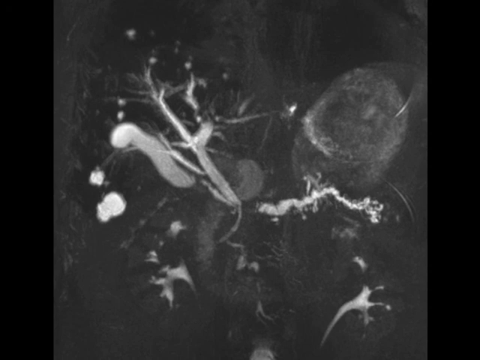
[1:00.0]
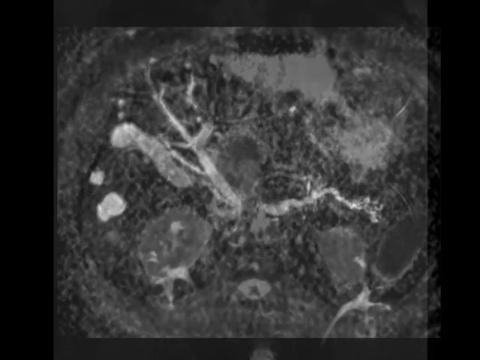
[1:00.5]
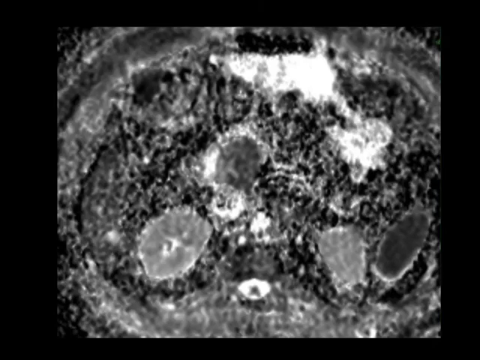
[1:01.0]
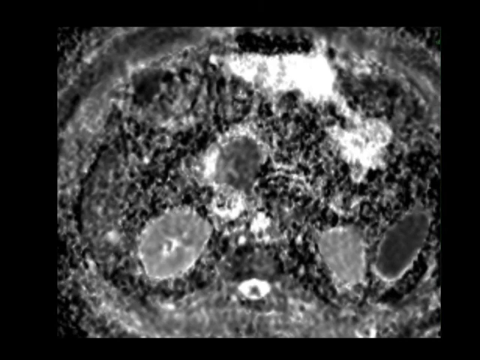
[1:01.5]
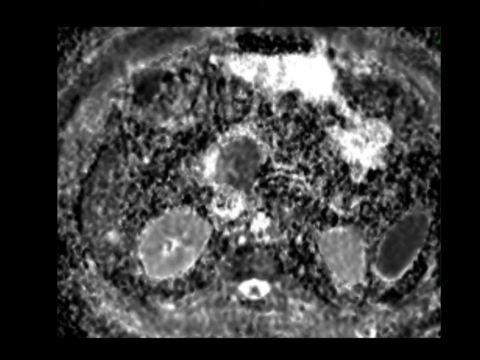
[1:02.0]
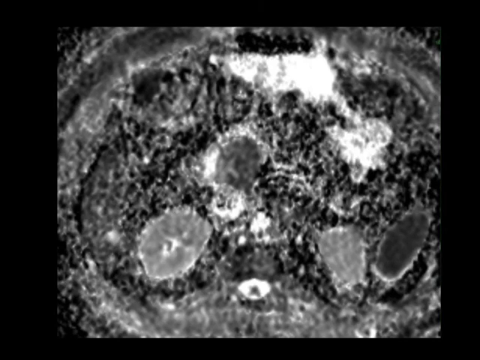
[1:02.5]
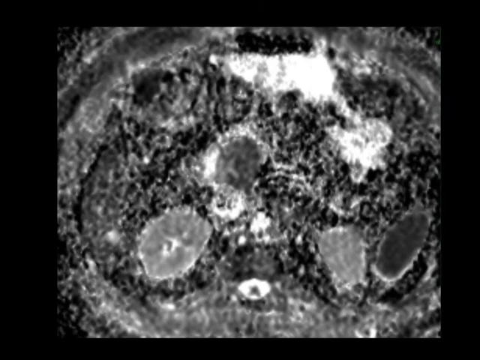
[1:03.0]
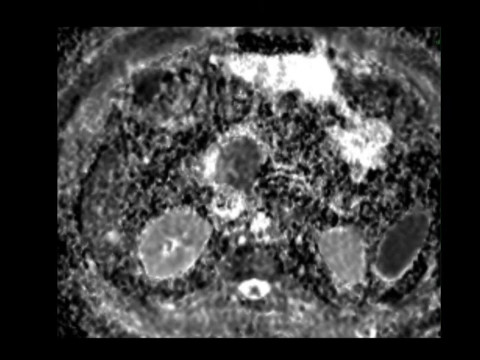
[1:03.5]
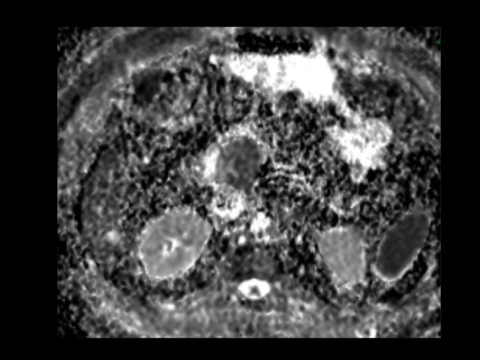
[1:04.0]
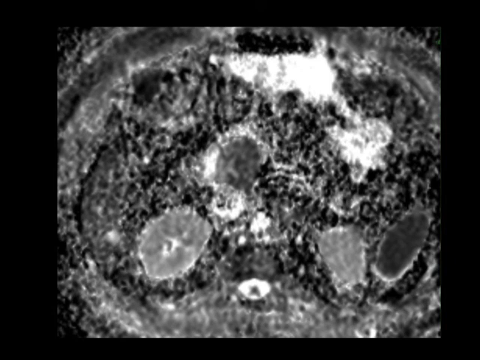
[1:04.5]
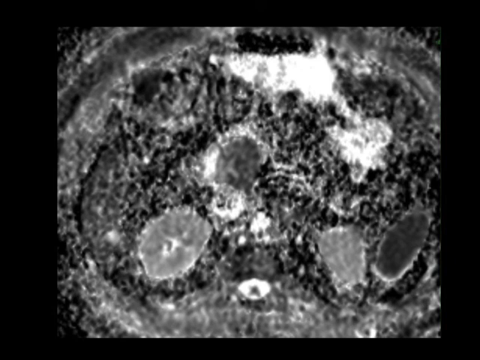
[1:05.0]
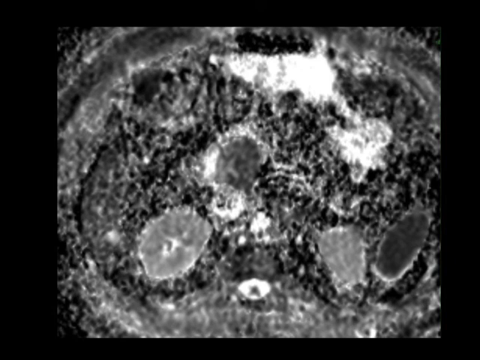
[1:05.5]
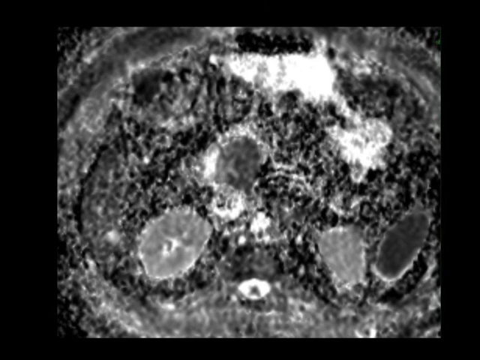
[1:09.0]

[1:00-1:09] The image with white, stained-glass-like objects is on the screen. Very quickly it changes to what seems like the original picture, although it looks deep-fried, with drastic gray and white colors. It seems to have changed quite a bit from the original. Some recognizable solid white objects remain, but they look like they have moved, and there appears to be some kind of change or damage. It could possibly be the same image viewed with a different tool.